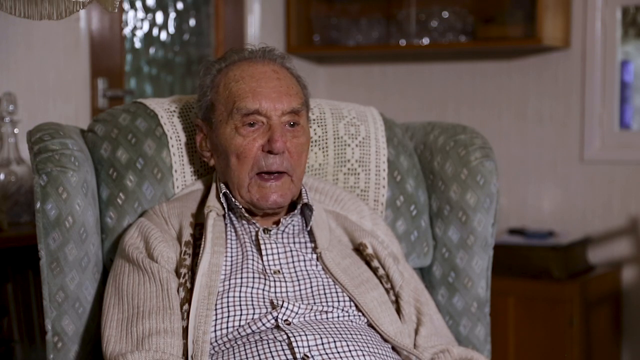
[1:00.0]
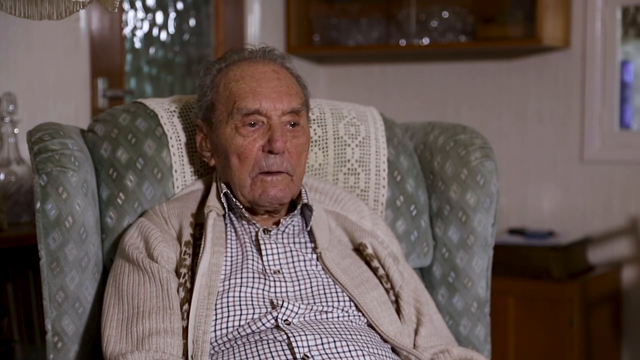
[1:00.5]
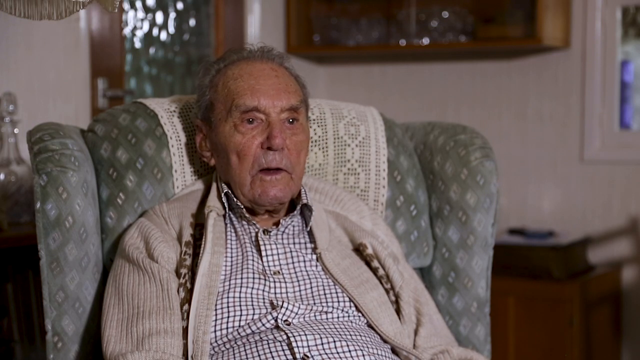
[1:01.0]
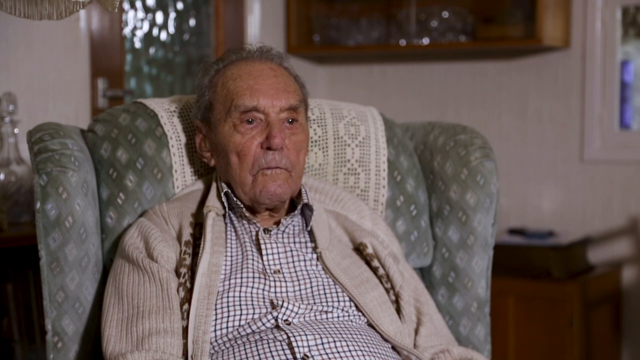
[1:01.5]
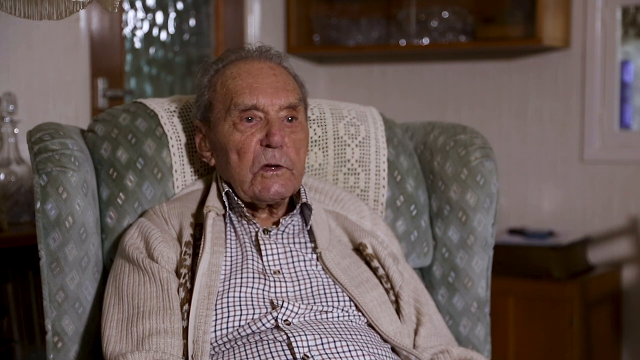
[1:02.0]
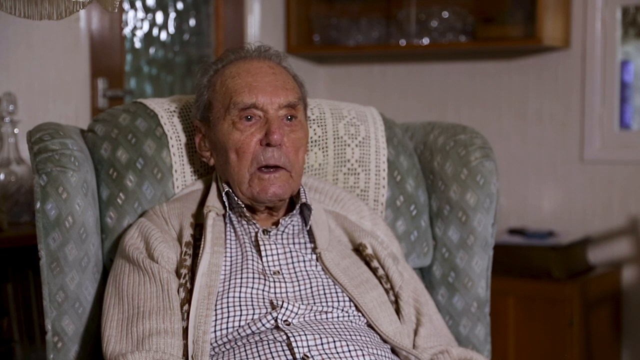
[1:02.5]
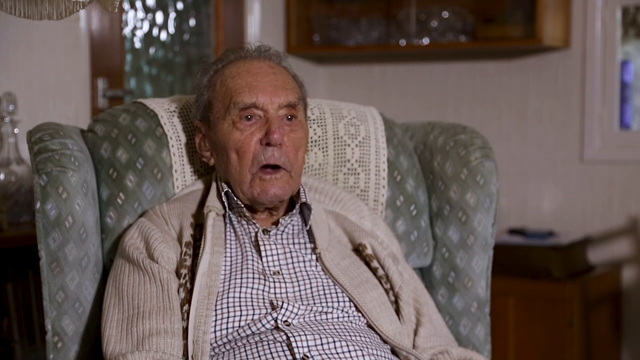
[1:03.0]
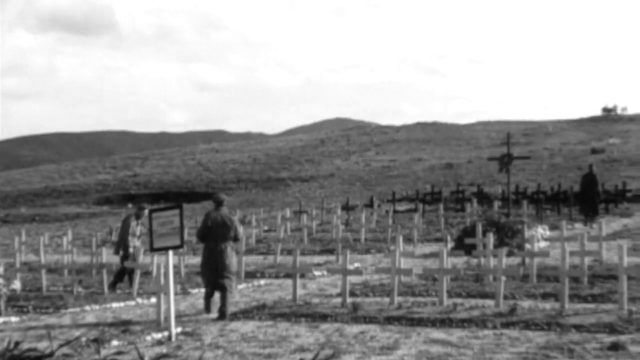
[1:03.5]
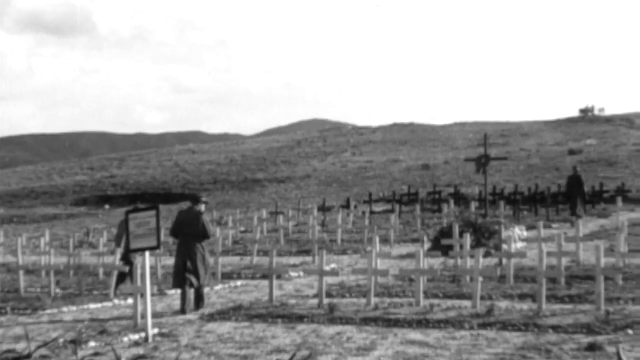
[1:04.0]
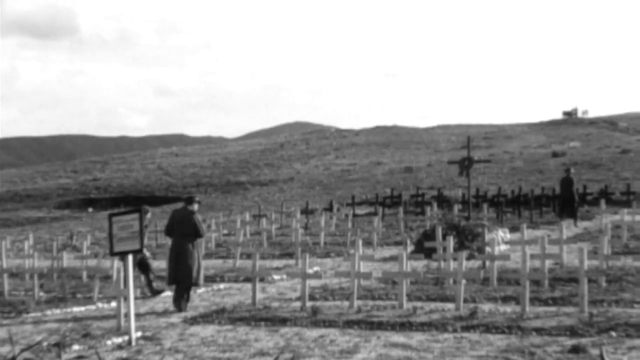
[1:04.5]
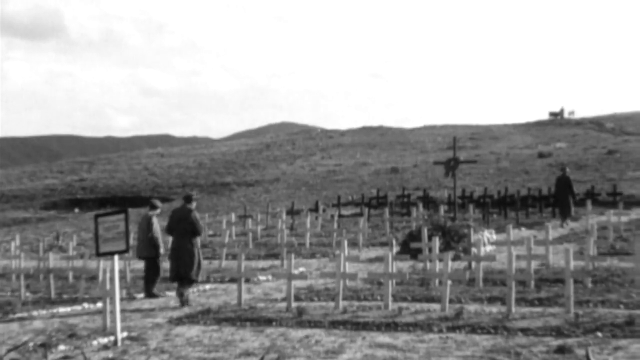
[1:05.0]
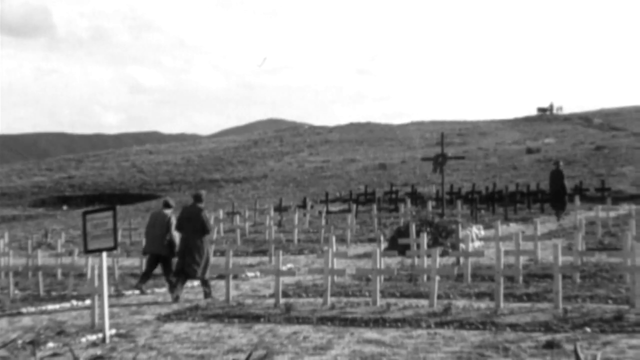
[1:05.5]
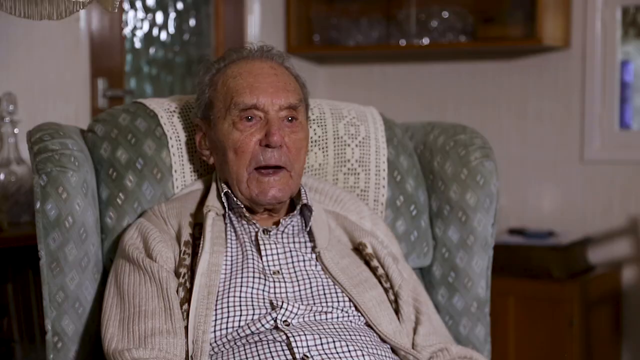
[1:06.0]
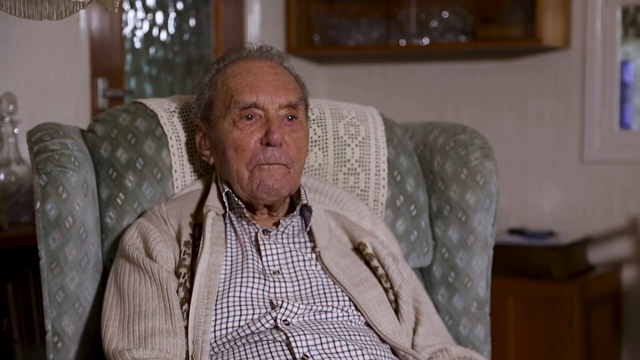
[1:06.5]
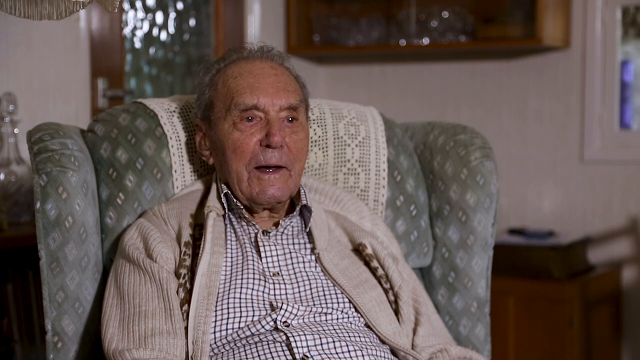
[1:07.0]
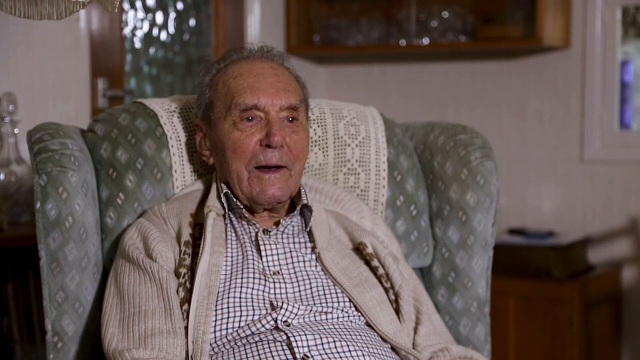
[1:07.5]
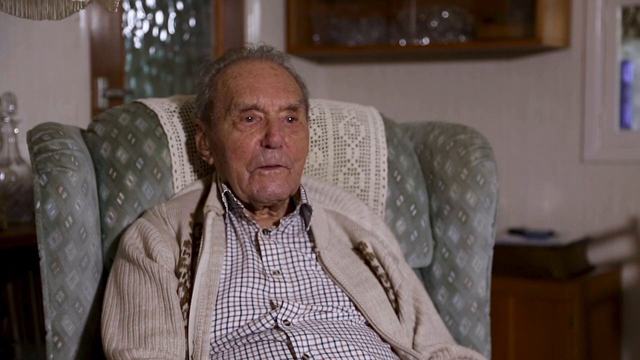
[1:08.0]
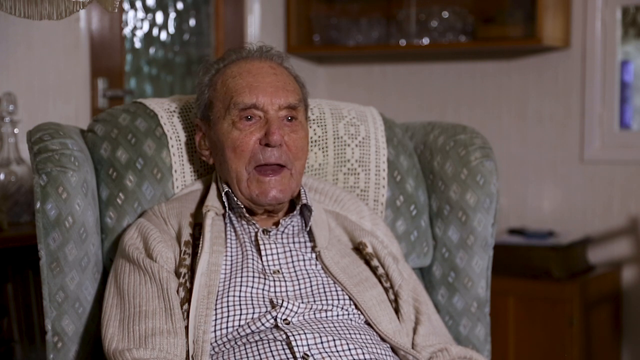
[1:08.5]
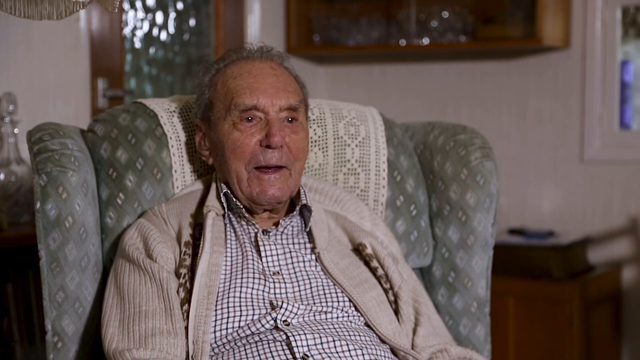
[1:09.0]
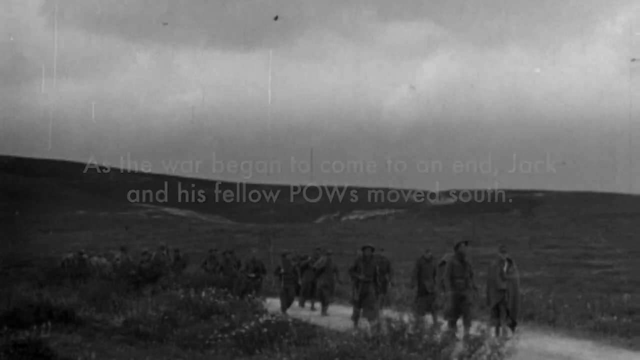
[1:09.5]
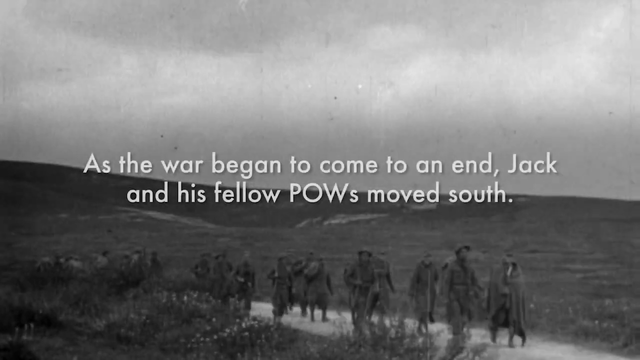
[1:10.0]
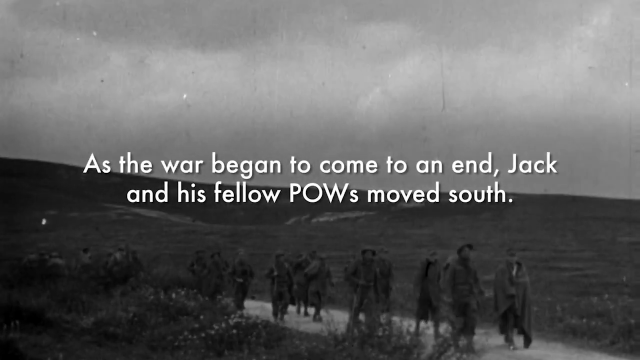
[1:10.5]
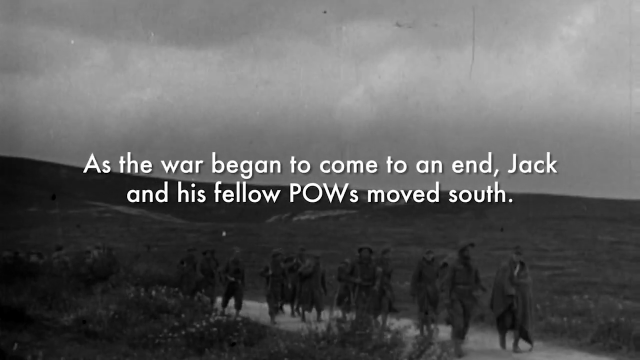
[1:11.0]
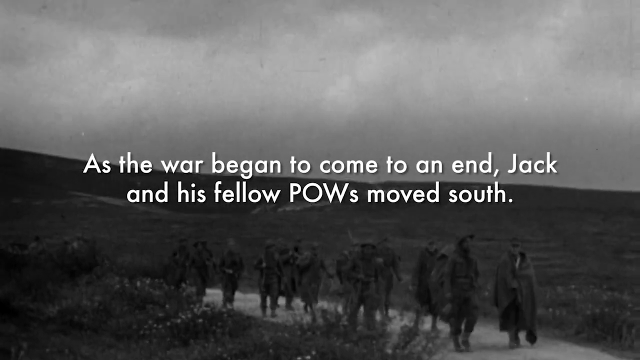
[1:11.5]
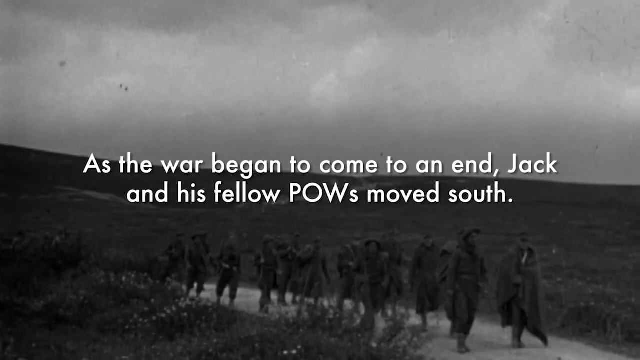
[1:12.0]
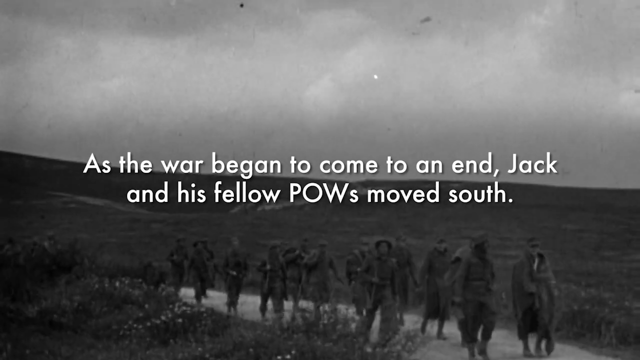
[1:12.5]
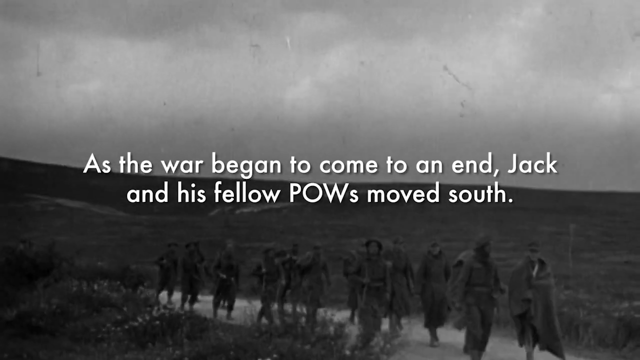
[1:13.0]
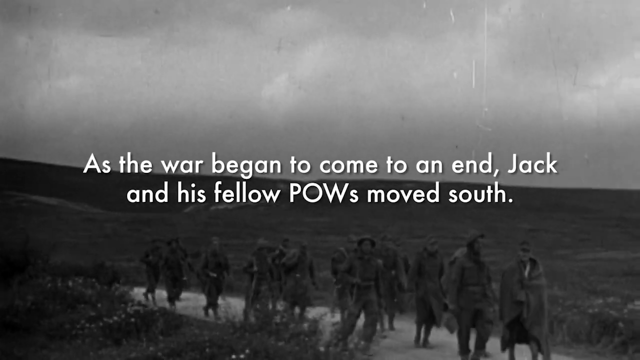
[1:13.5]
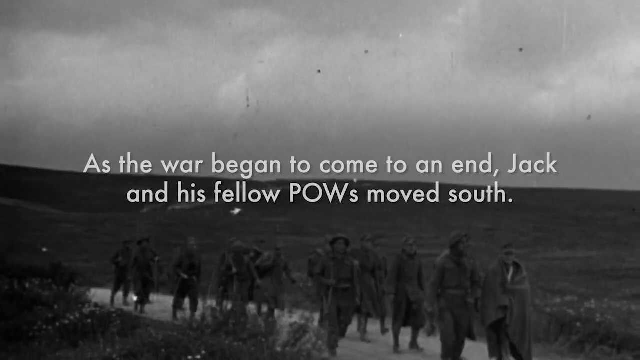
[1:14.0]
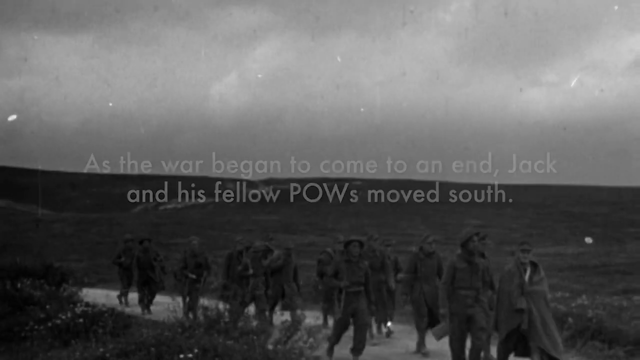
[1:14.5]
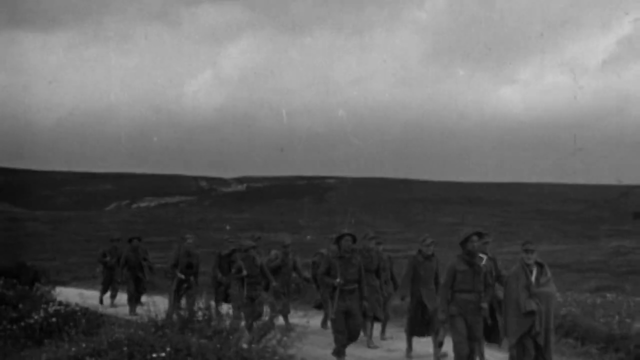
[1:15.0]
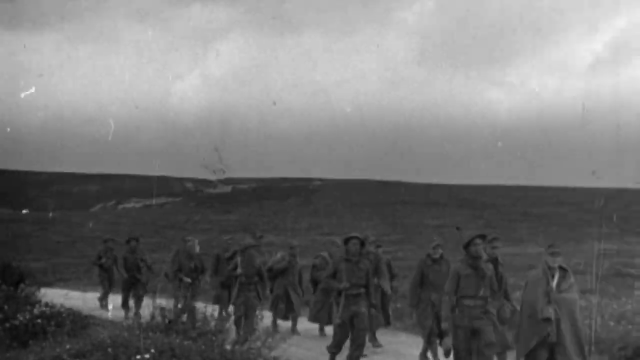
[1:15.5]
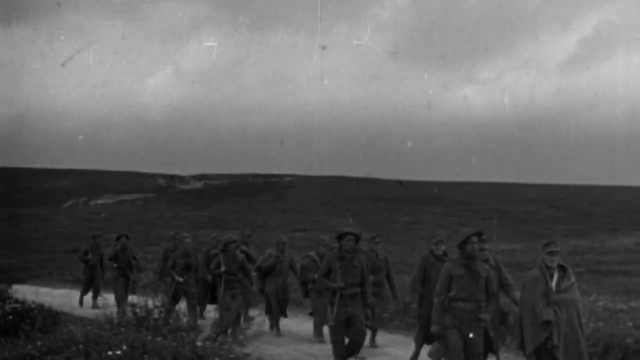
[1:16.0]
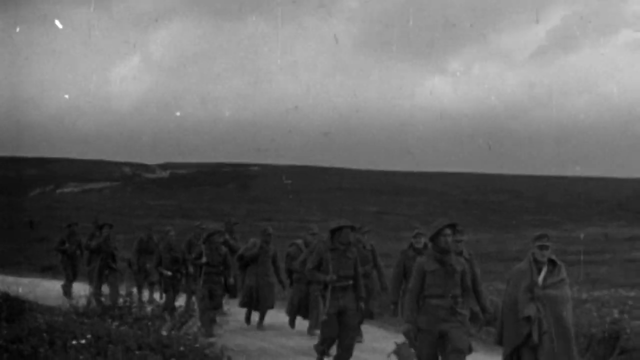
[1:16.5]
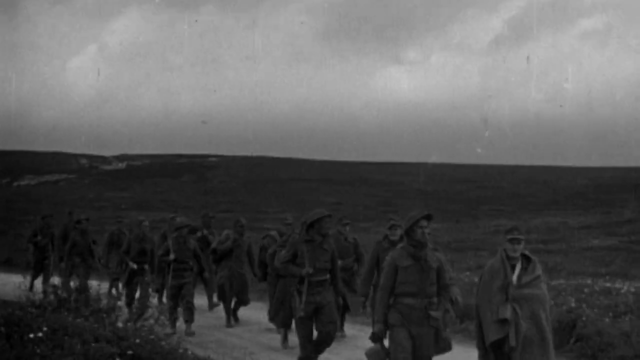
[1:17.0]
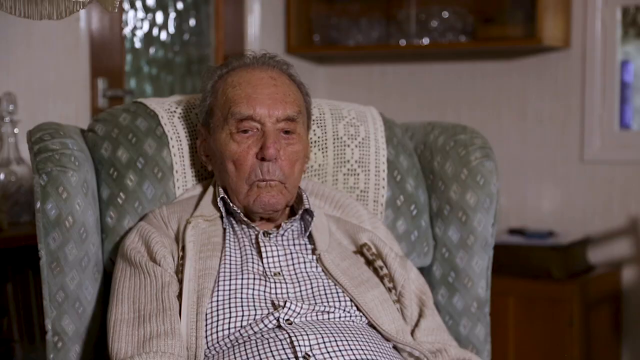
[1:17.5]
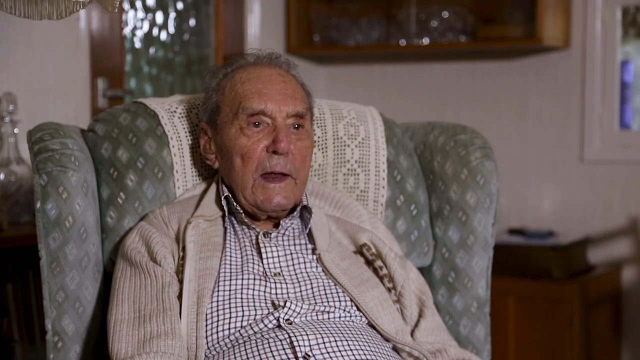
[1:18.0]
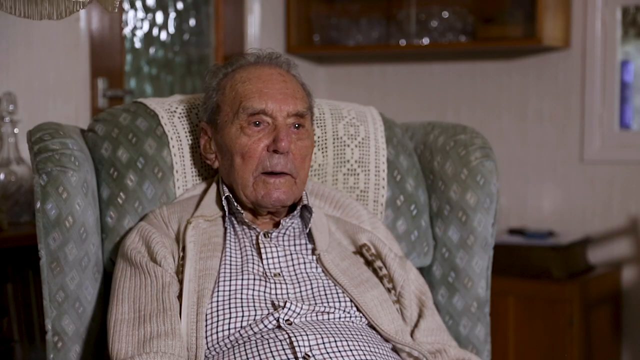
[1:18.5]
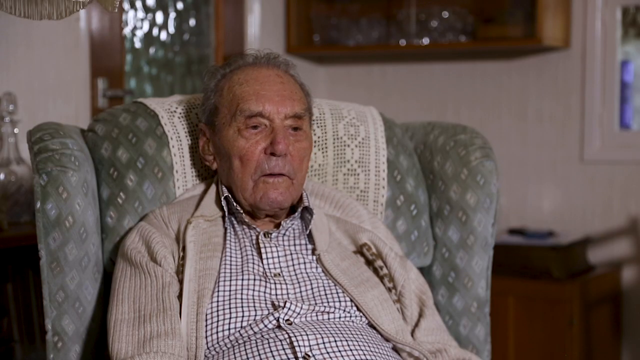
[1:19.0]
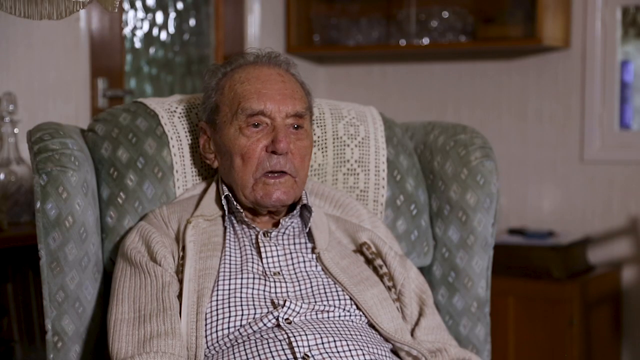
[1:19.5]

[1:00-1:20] An elderly man seated in an armchair speaks to the camera. The scene moves to a field with crosses across it, which appears to be a cemetery; a man is in the bottom corner and a car is parked nearby. Two men approach the cemetery. The video returns to the elderly man in the chair, then changes to black and white with text reading "As the war began to come to an end, Jack and his fellow POWs moved south." A line of men walks down a roadway in black and white. The video returns to the elderly man speaking, then shows a fast clip of a group of men walking down a roadway, and returns once again to the elderly man speaking. His eyes are moist as if he is sad.